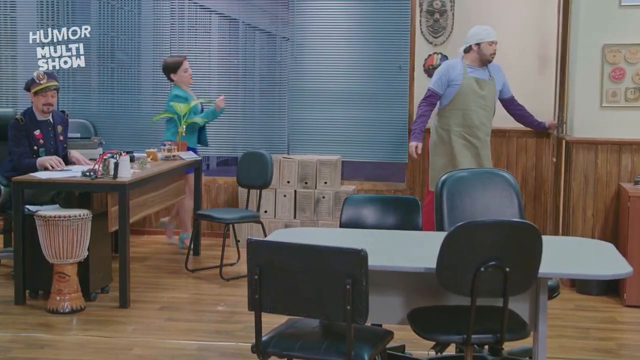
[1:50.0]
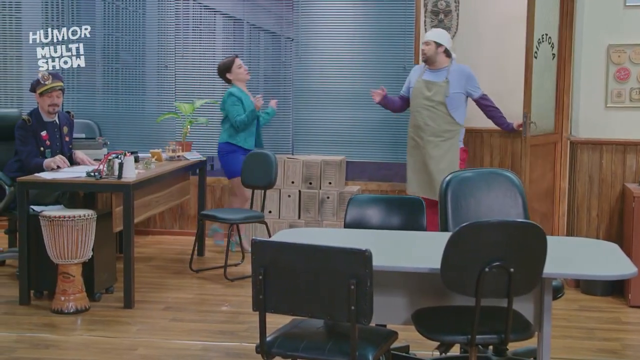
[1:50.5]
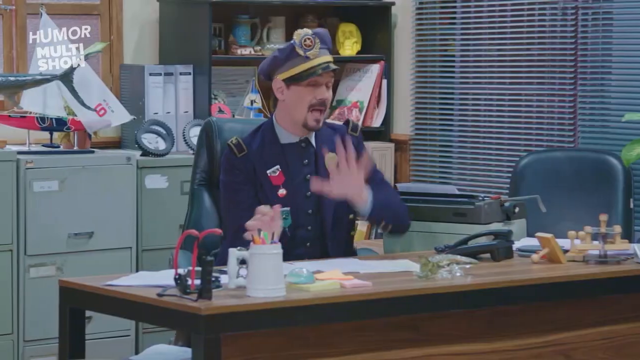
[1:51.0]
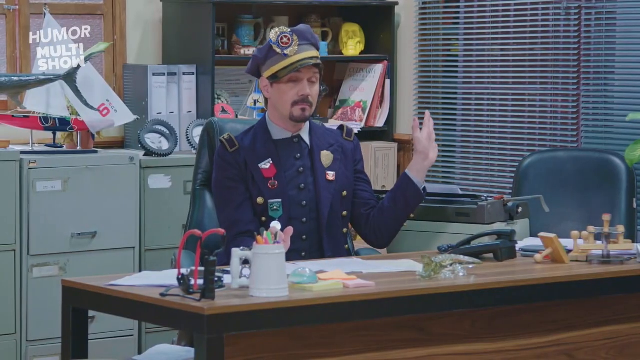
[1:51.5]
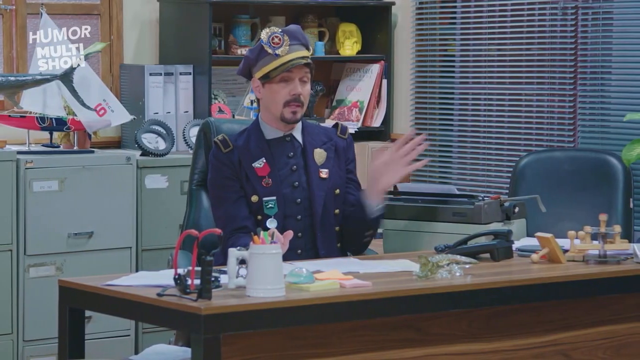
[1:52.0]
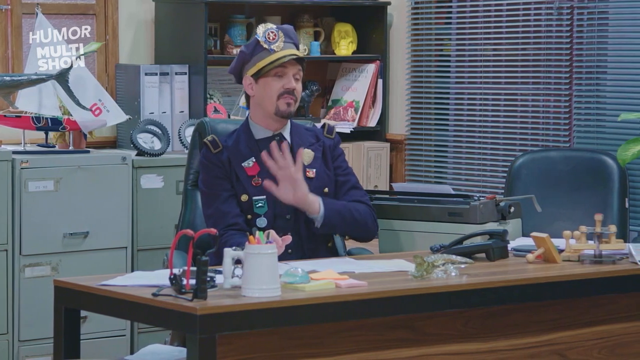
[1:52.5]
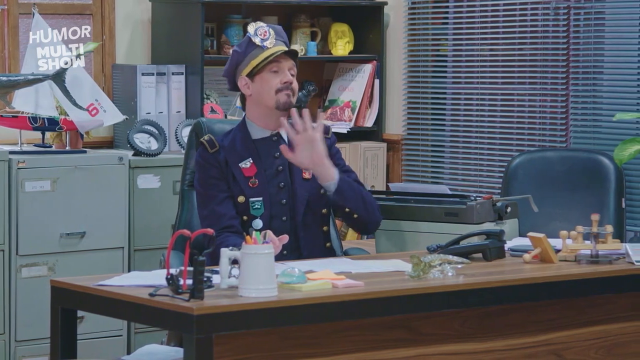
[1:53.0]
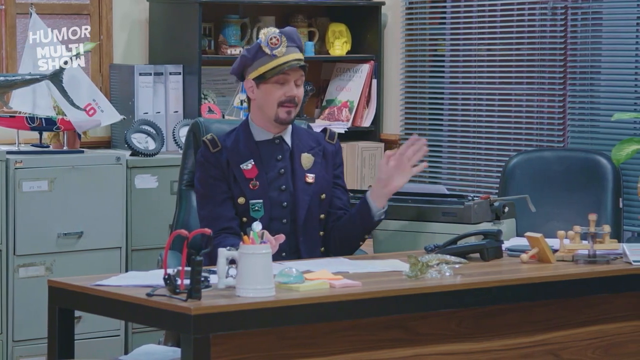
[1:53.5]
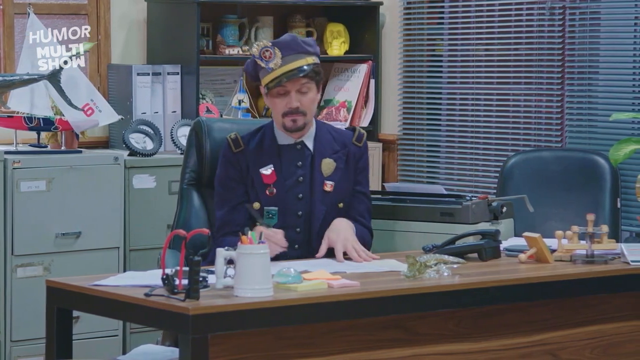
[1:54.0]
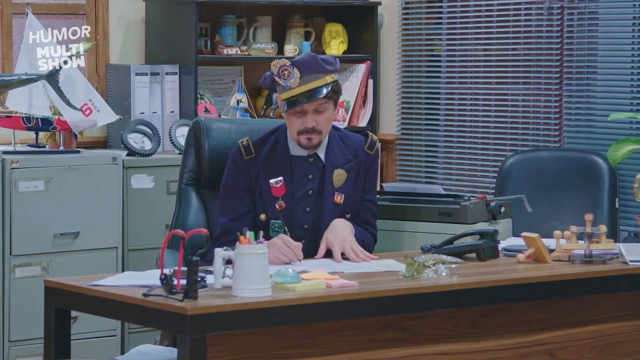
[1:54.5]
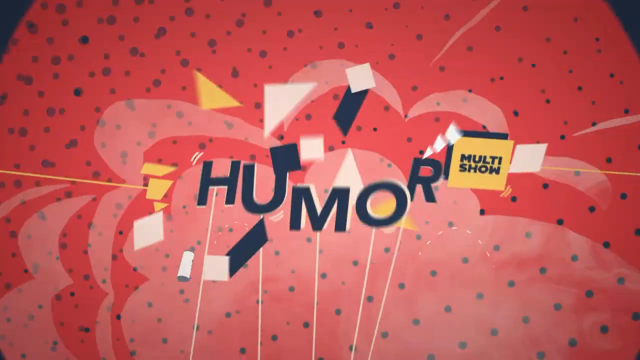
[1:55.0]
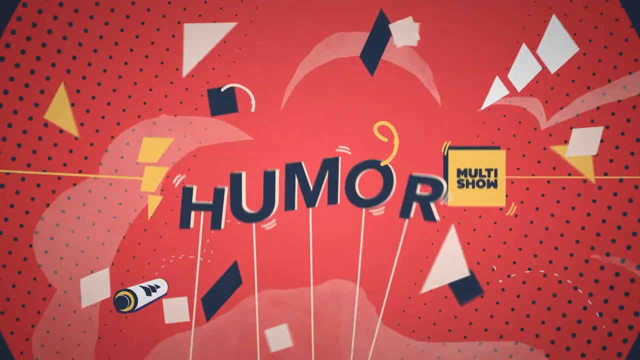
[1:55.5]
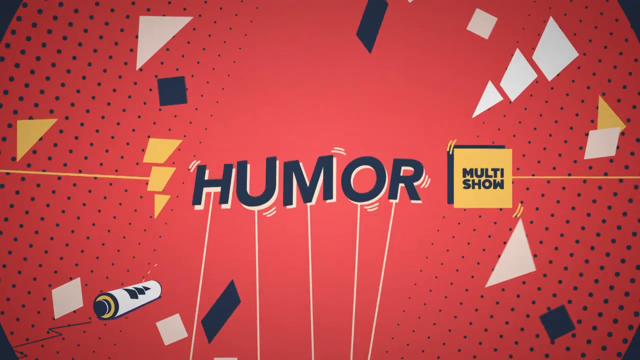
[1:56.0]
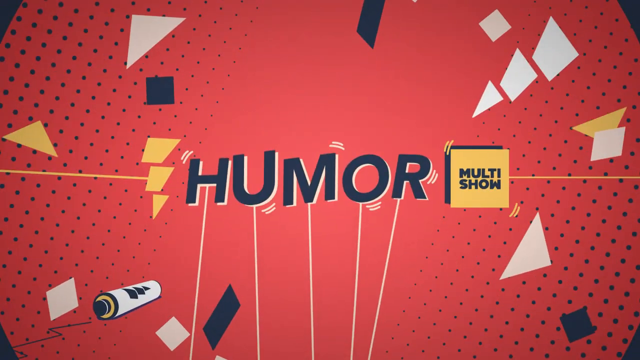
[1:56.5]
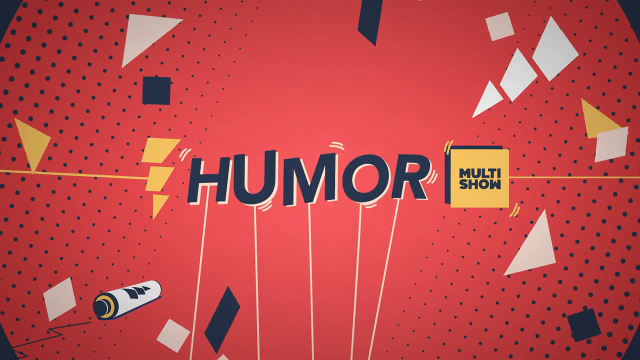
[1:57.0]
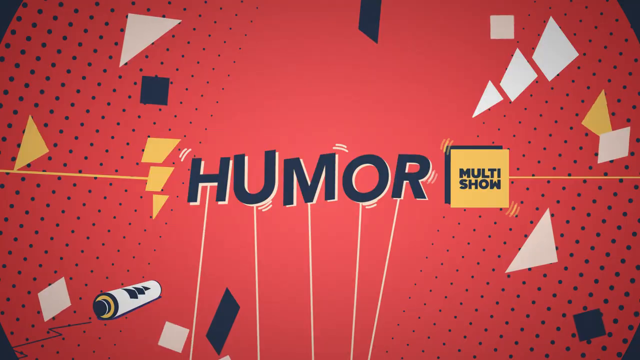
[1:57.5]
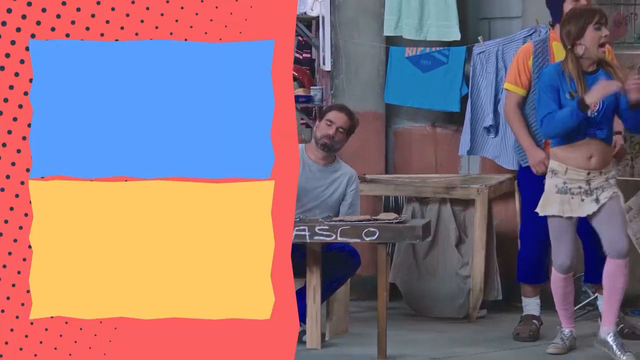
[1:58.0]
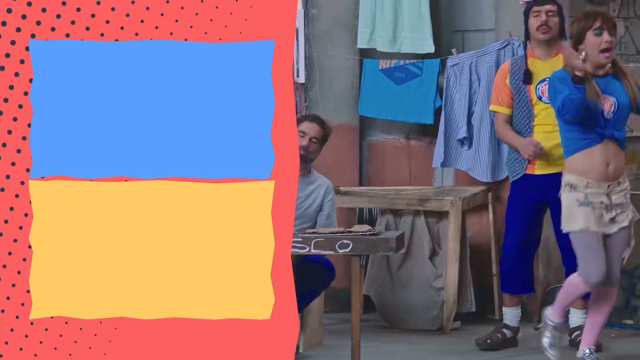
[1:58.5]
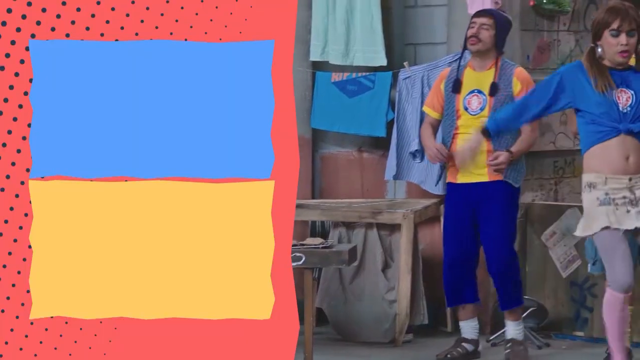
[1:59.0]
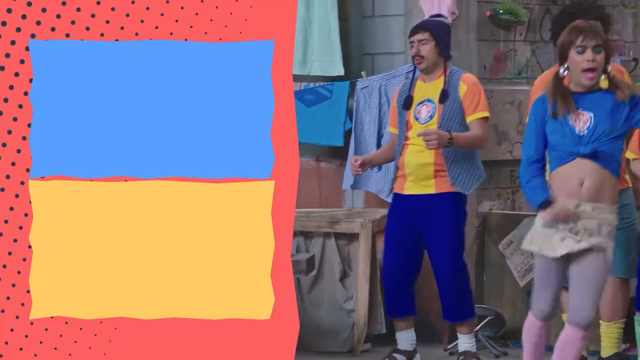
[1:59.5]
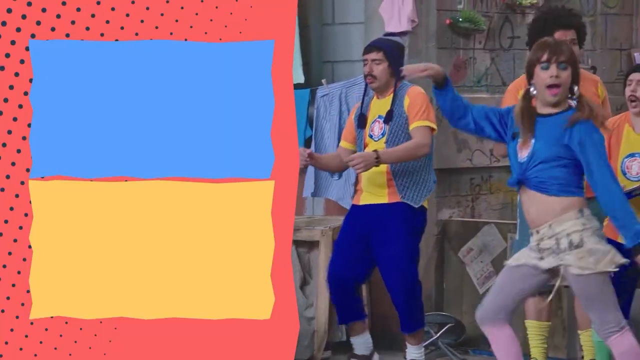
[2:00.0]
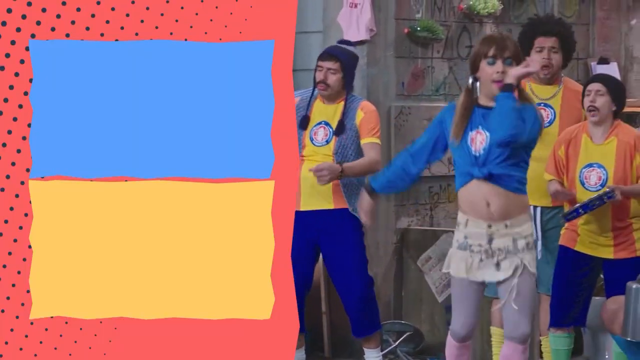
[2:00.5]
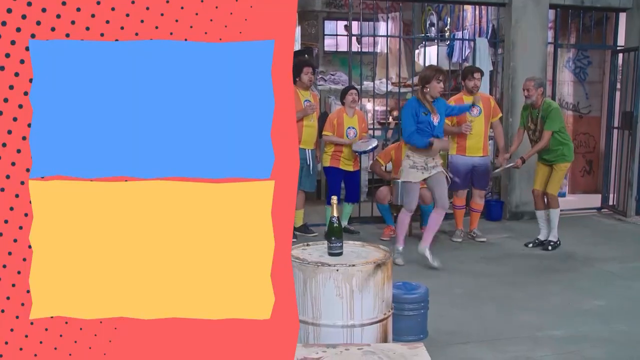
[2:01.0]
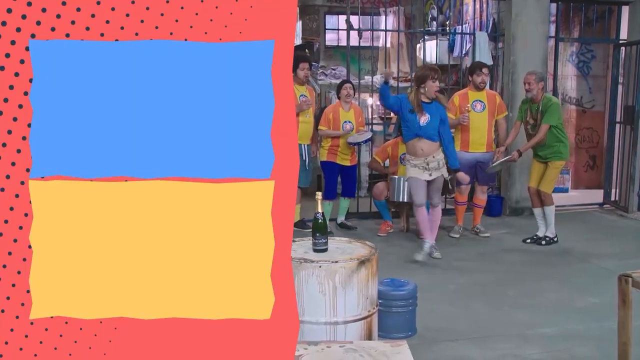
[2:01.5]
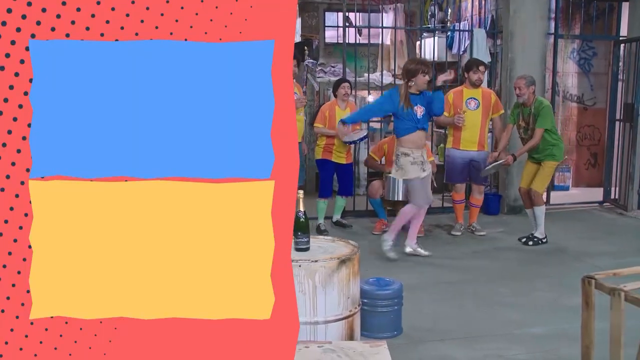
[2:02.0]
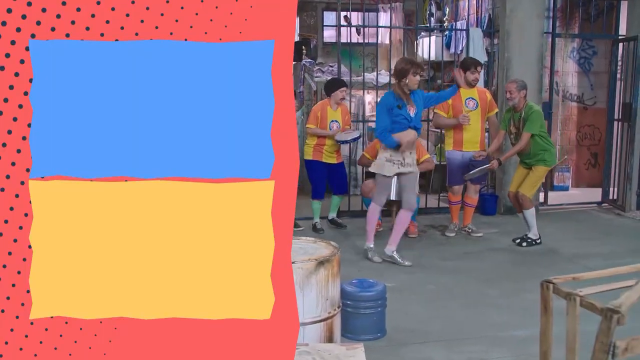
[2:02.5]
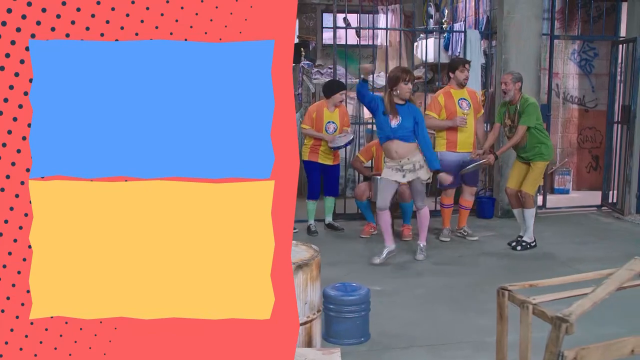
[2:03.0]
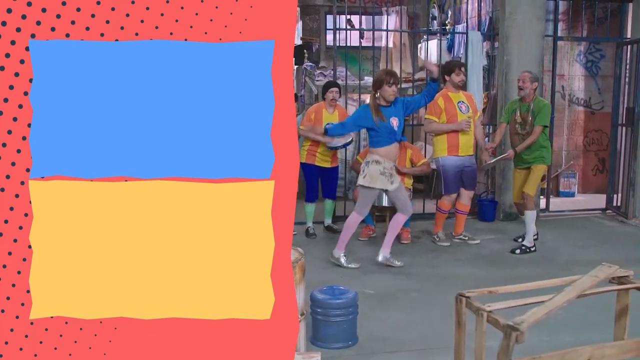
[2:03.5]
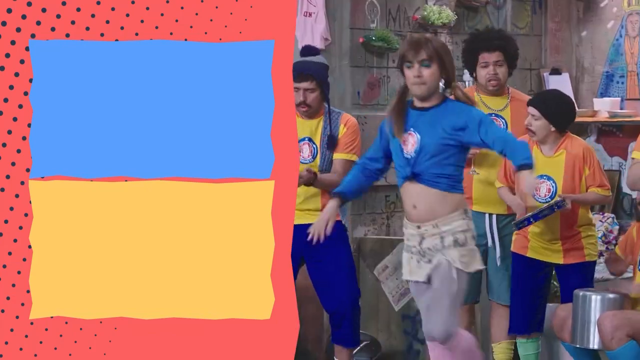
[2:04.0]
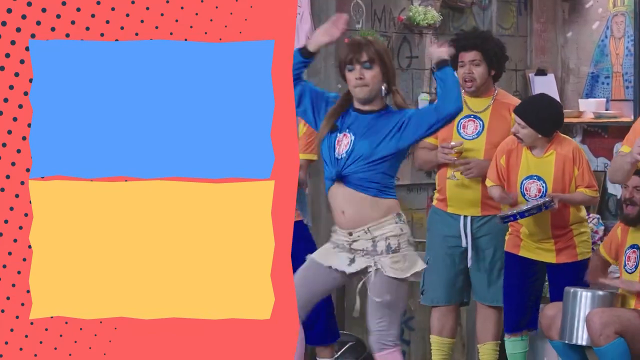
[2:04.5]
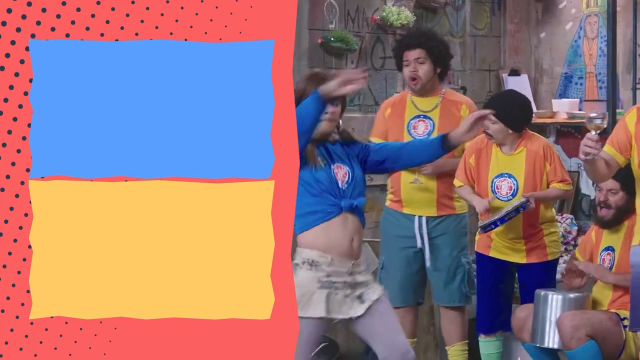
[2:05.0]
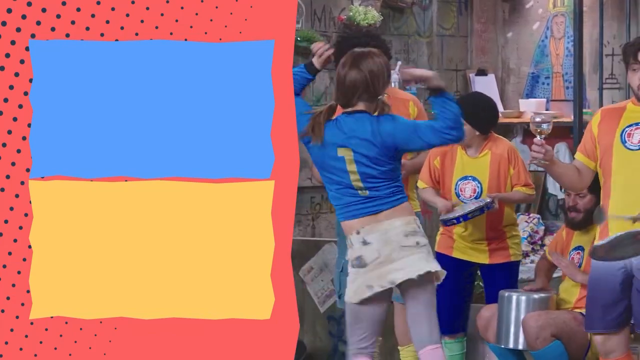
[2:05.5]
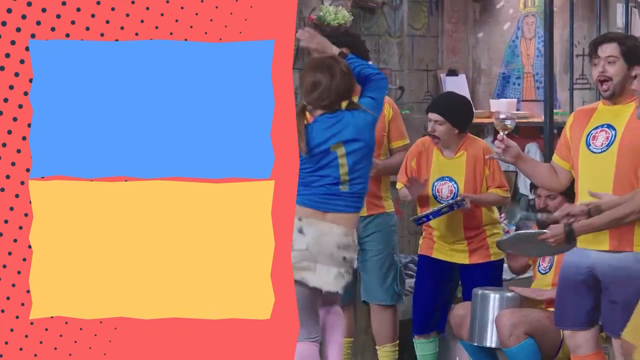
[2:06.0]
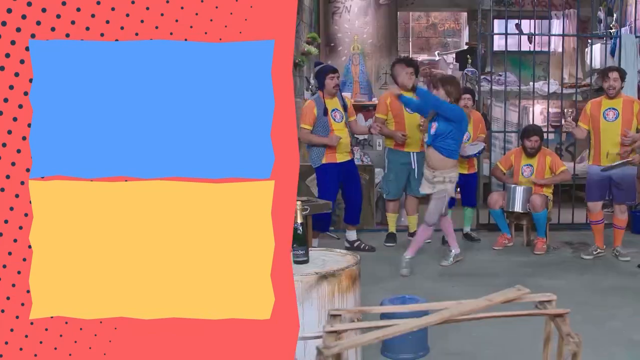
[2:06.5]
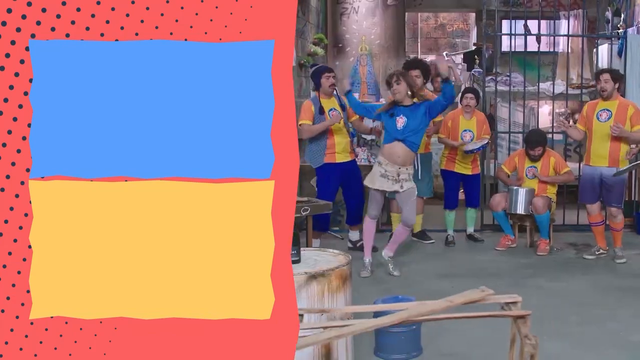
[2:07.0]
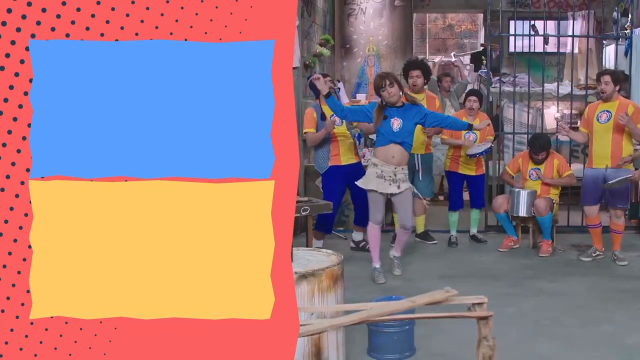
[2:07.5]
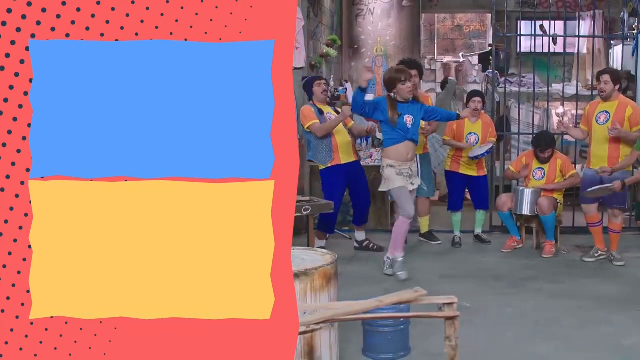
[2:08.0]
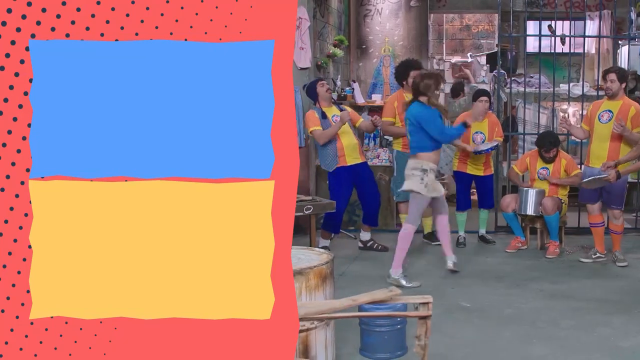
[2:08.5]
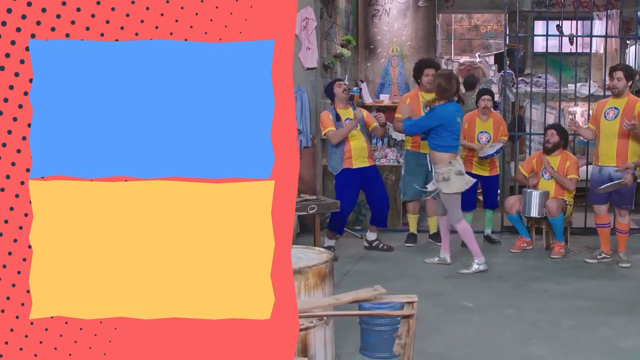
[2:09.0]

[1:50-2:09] The man in the surgeon hat is leaving, and the lady from the typewriter walks him towards the door, while the man in the military suit stays seated and waves his hand as if to say this is the best he can do. The text "humor, multi-show" appears. In an ending scene, a couple of people play instruments, wearing yellow and orange jackets like warning jackets. The man in blue who was talking to the dead man is there. A lady dances quickly by herself, waving her hands around. A red background shows the name of the show, apparently multi-show or multi-humor. Some men play what seems to be a Mexican instrument, someone plays a tambourine, and someone plays a small drum.